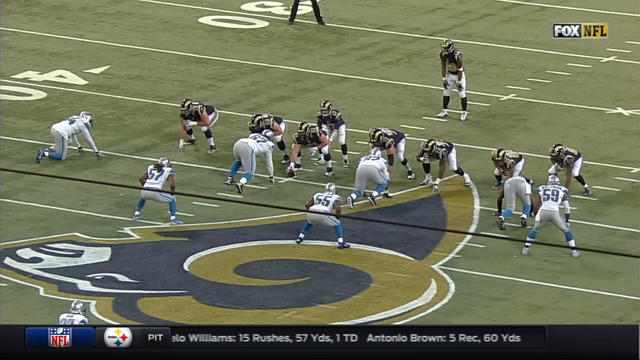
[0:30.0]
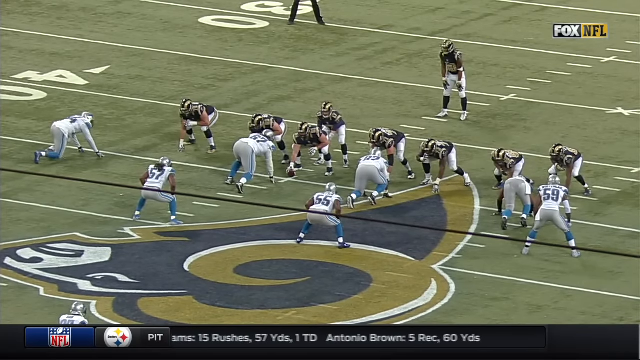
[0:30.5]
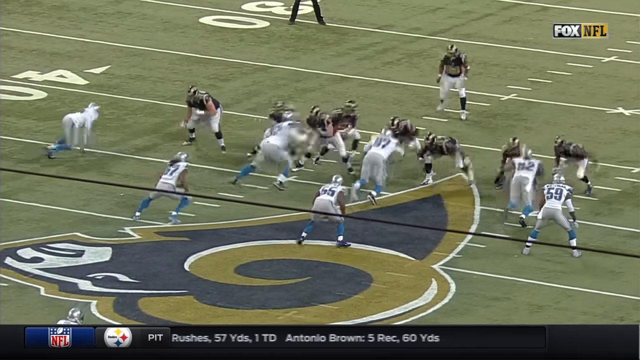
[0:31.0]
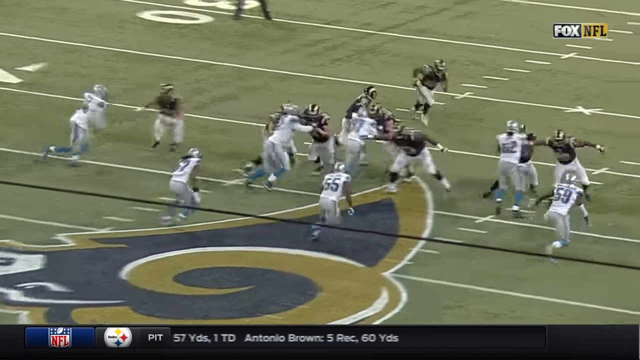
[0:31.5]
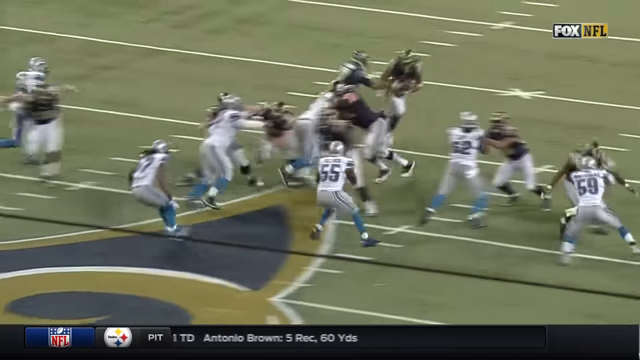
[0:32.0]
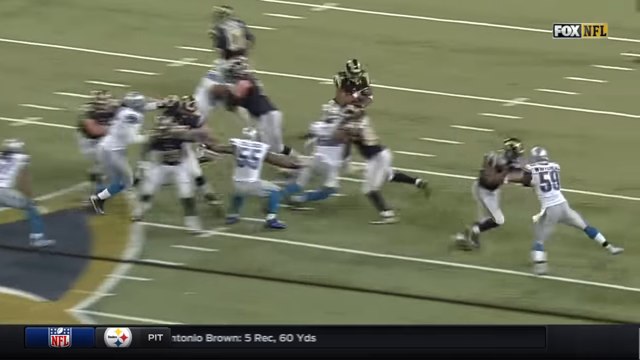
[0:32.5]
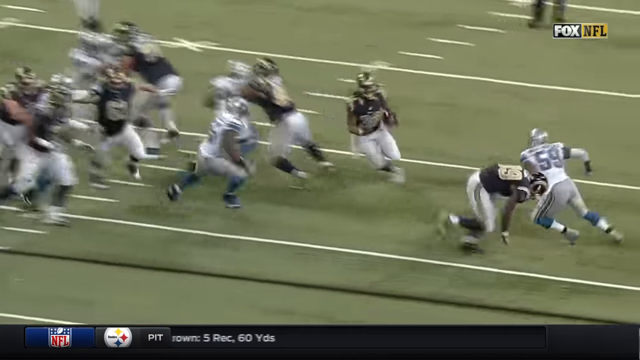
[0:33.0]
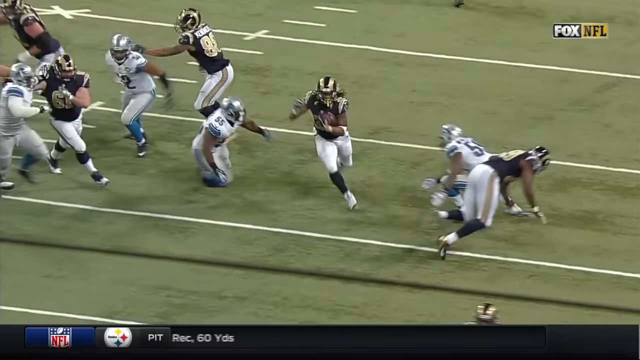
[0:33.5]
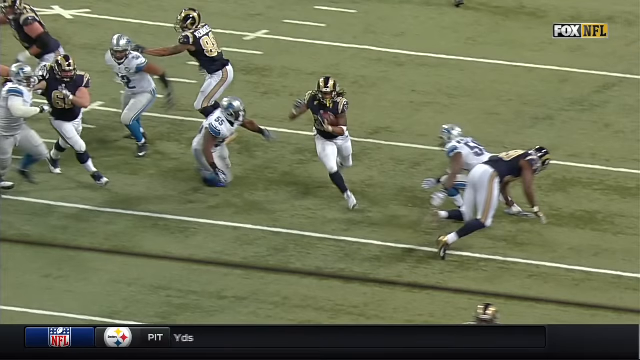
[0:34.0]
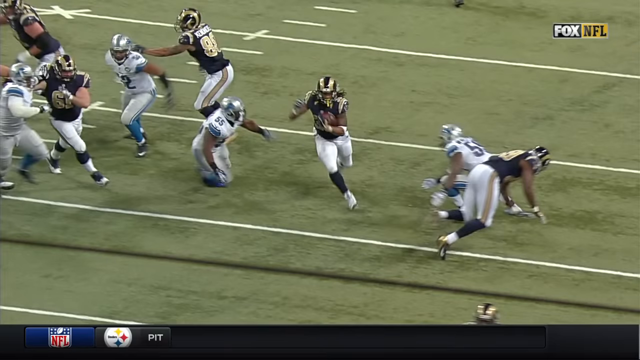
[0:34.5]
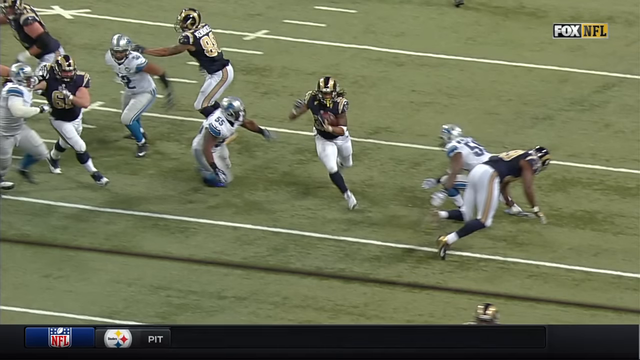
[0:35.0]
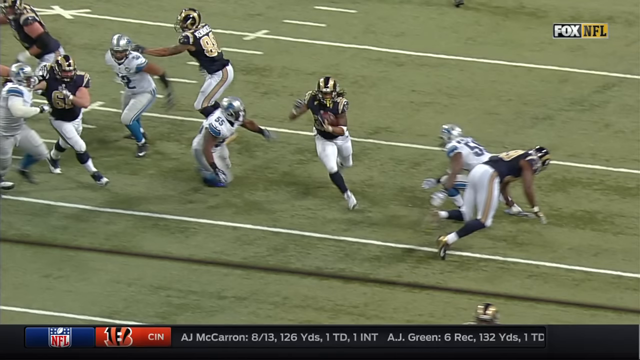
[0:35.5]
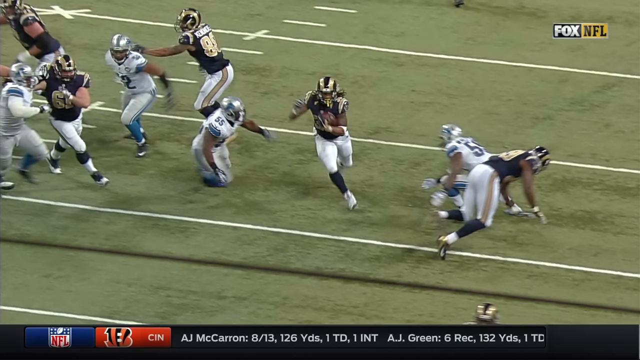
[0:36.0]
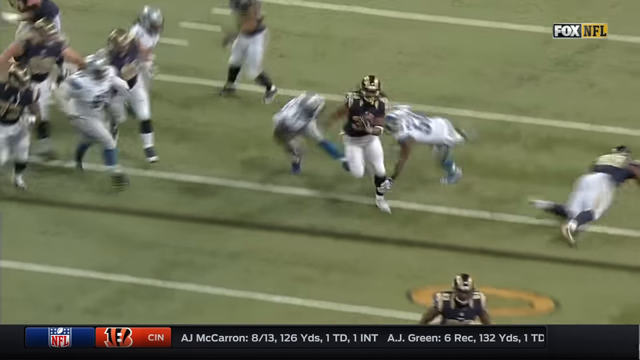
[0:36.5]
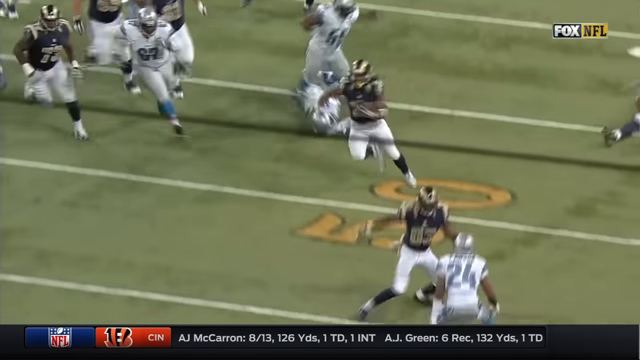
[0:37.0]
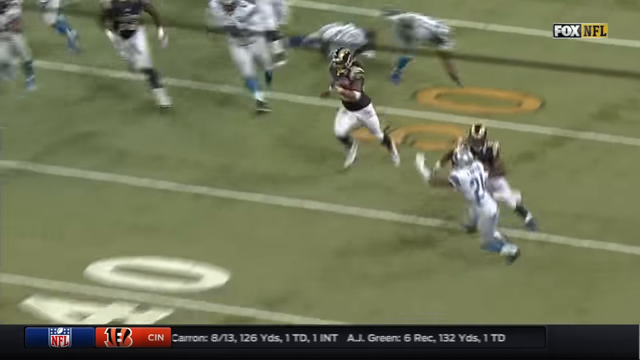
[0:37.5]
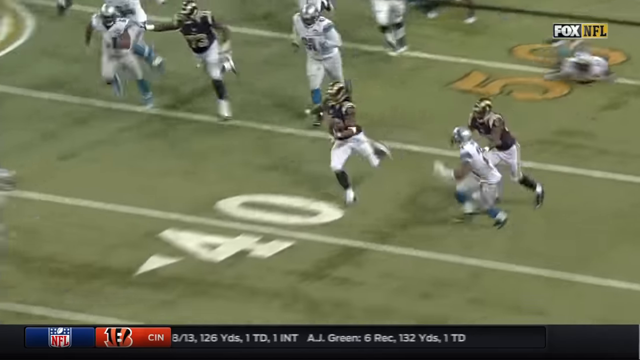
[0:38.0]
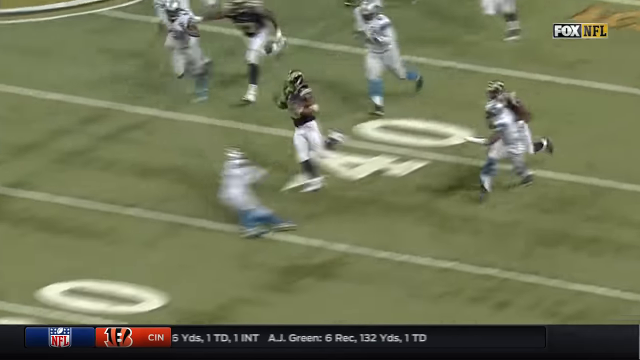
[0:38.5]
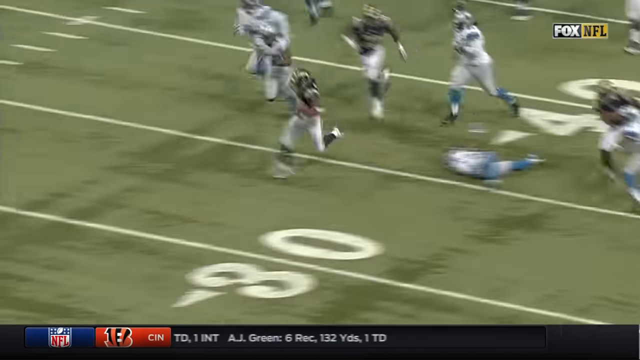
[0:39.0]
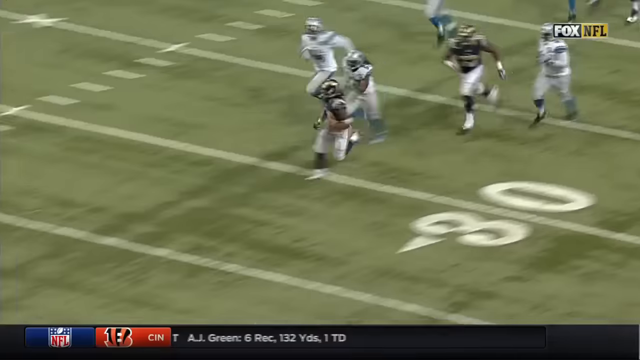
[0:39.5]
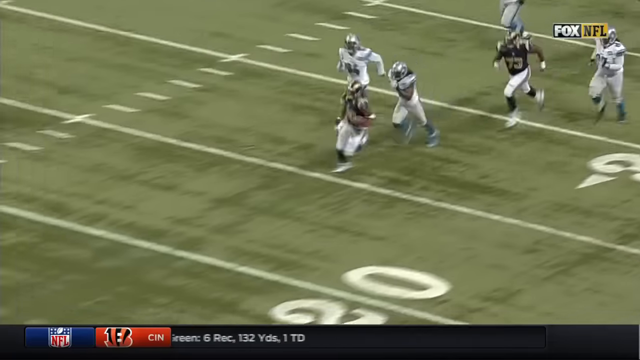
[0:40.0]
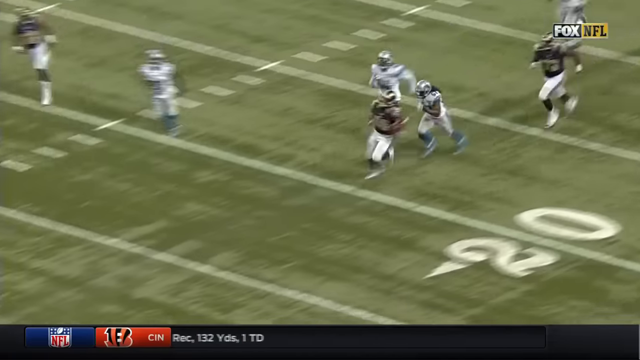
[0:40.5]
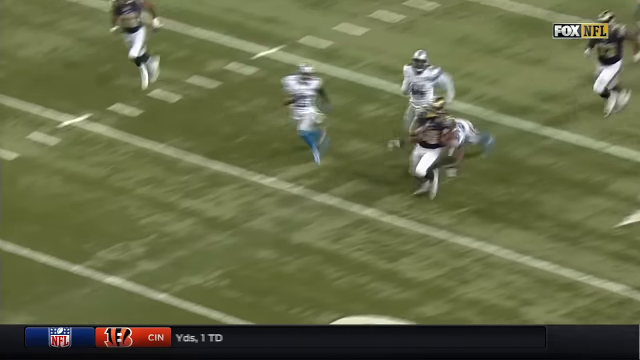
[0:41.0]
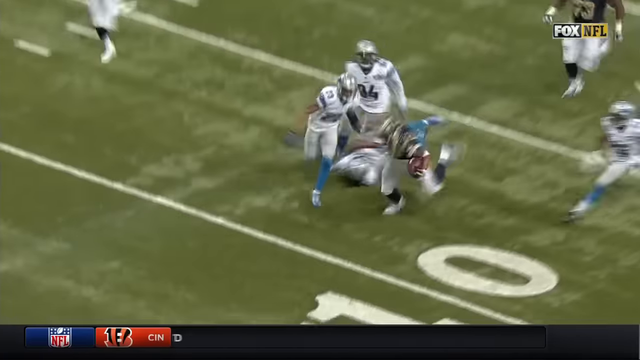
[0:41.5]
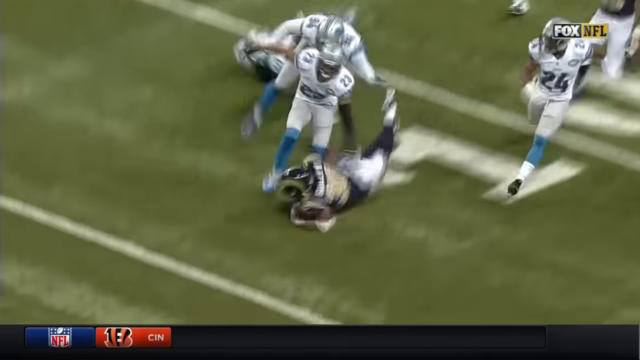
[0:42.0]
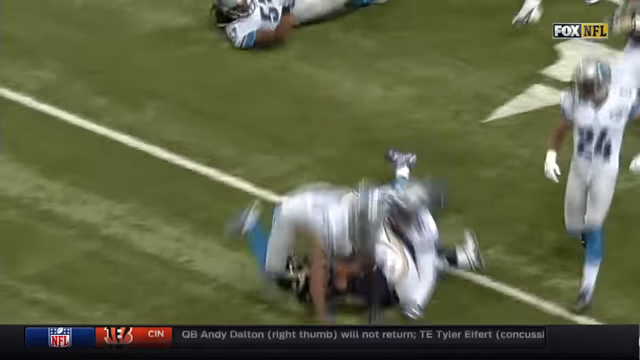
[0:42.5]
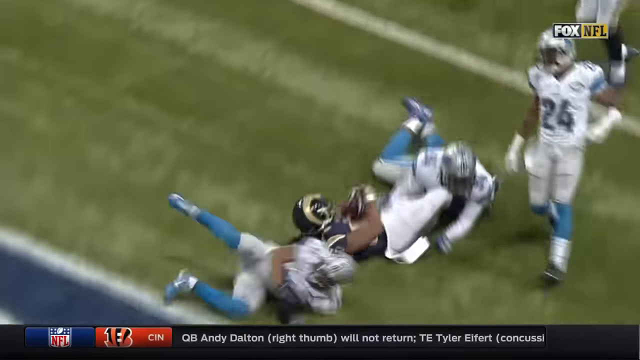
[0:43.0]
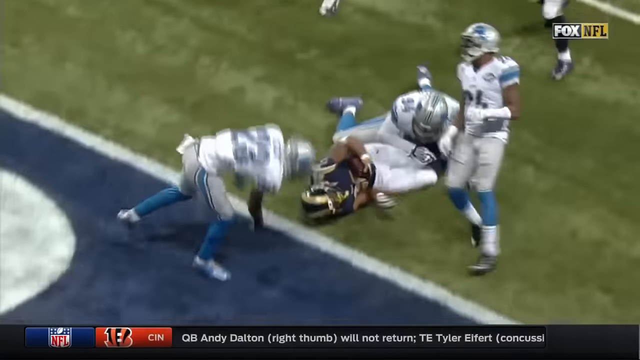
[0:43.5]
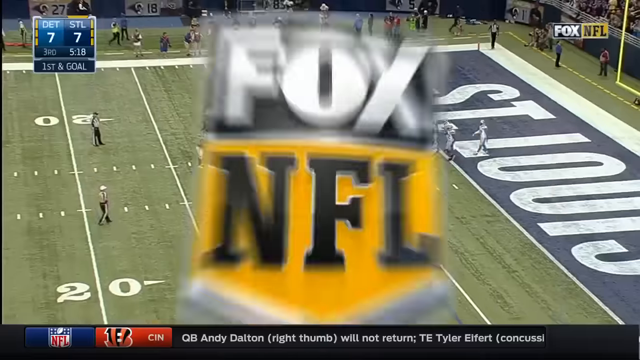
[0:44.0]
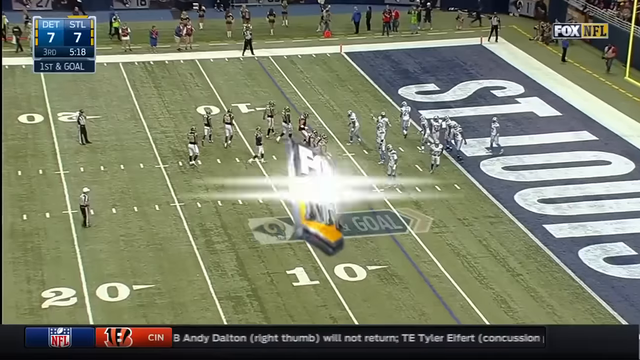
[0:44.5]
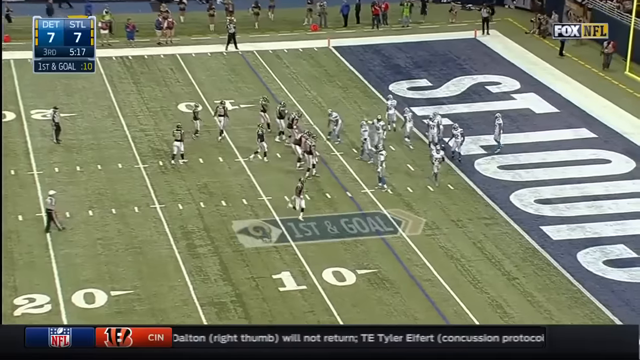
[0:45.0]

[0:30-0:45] The play is replayed from a different angle. Players block each other, and the handoff happens behind the line of players blocking into each other. The player who receives the pass runs tight around a teammate who is blocking an opponent. An opponent just behind him slips, and the player on the other side of the runner dives and misses, so both miss at pretty much the same time and have to start chasing the runner. He makes a quick direction change away from an opponent, moves to his right and jumps, and this direction change makes the opponent in front of him slip. He is then chased down by three different opponents in a straight line, and he just about makes it across as the play comes to an end.